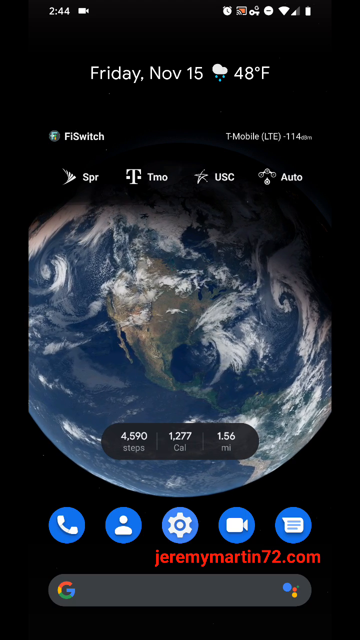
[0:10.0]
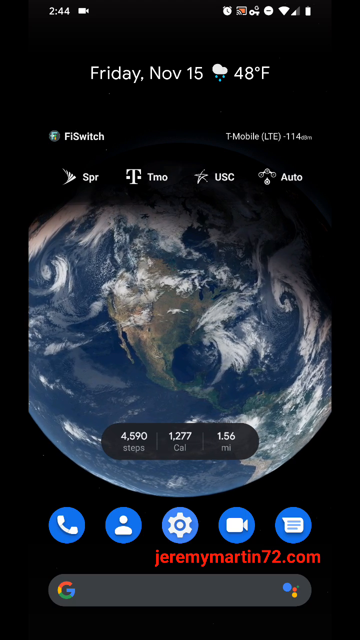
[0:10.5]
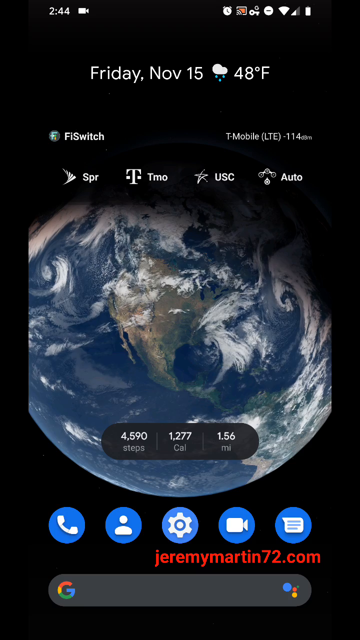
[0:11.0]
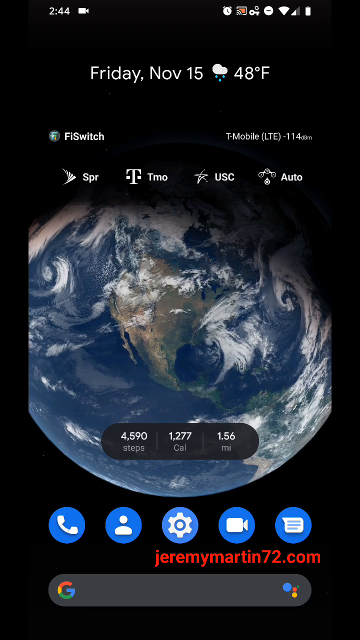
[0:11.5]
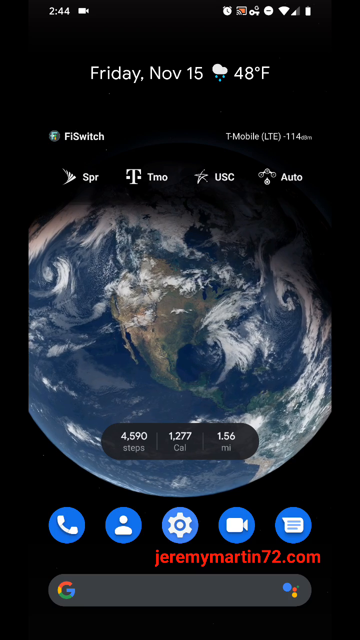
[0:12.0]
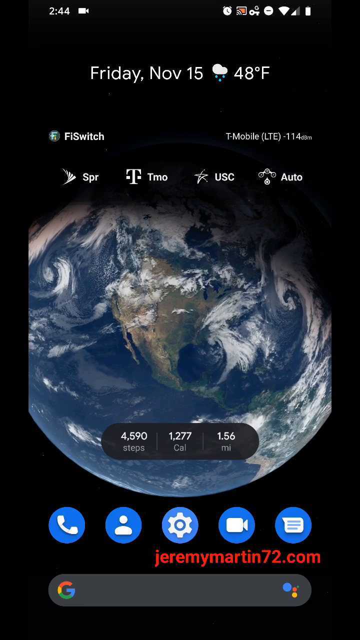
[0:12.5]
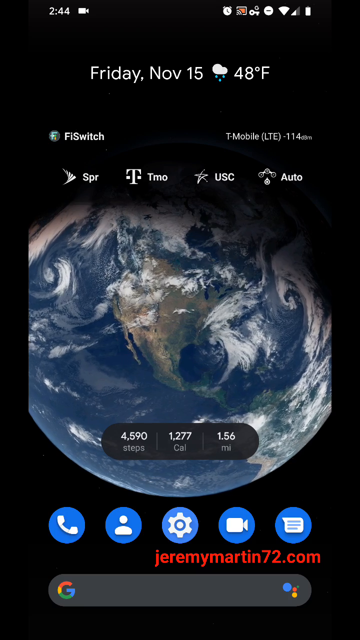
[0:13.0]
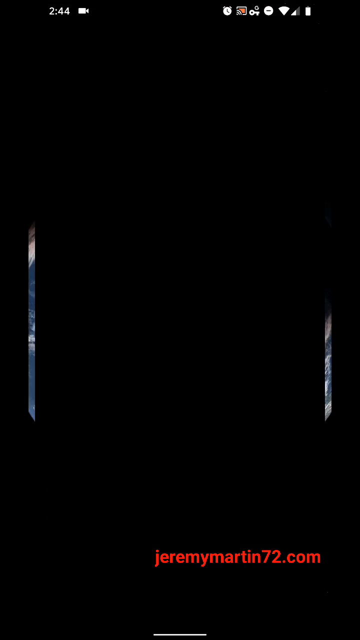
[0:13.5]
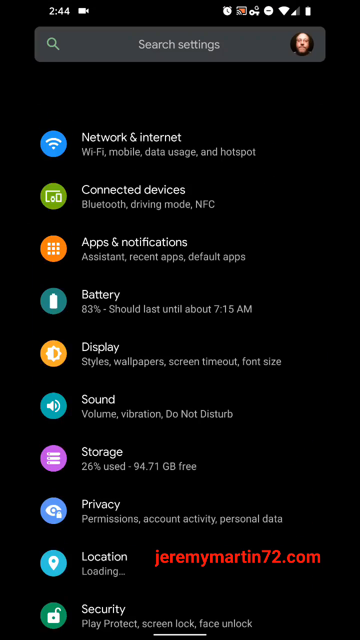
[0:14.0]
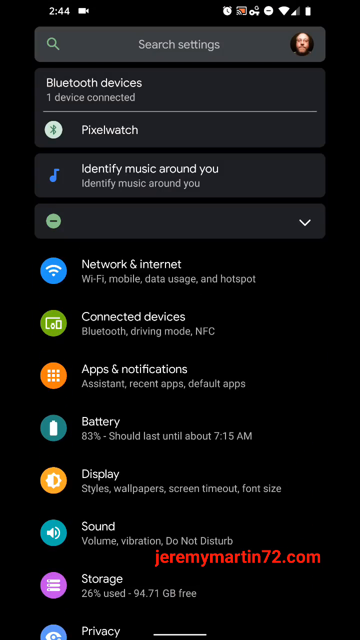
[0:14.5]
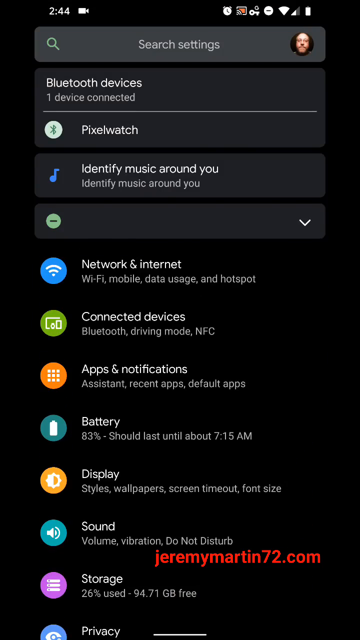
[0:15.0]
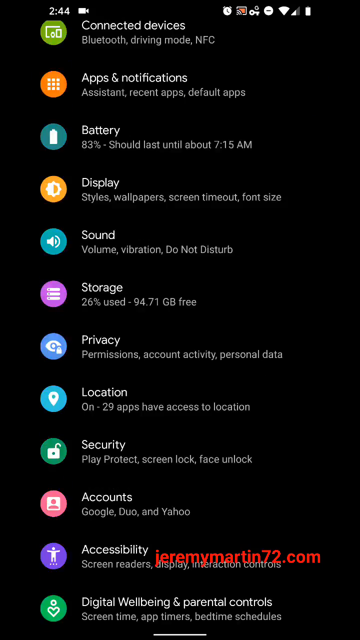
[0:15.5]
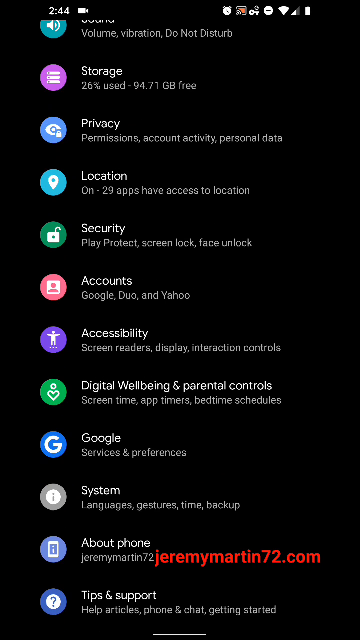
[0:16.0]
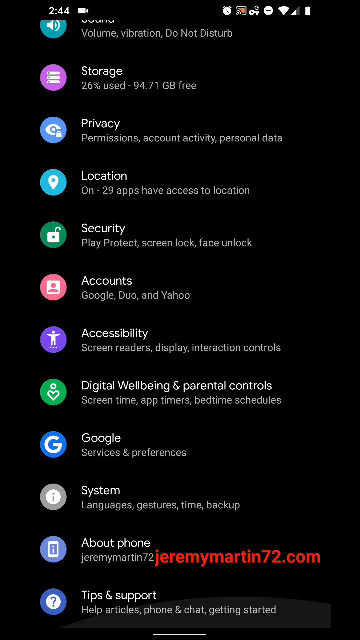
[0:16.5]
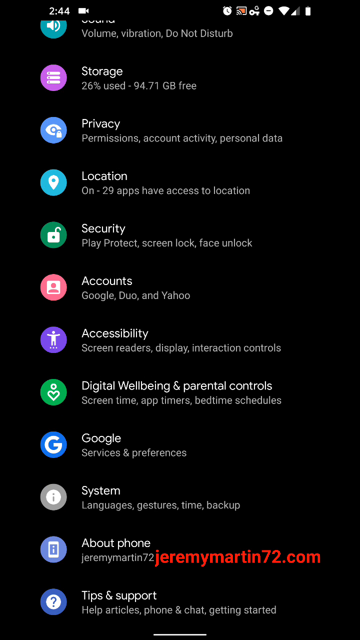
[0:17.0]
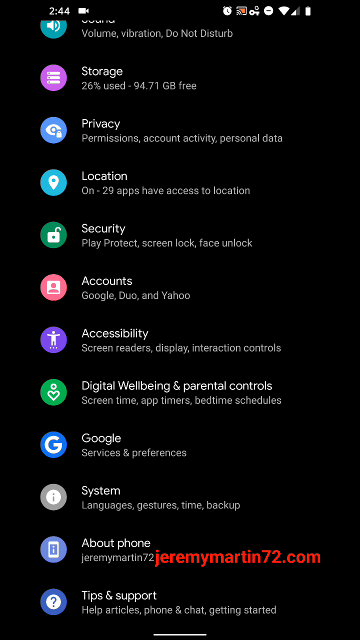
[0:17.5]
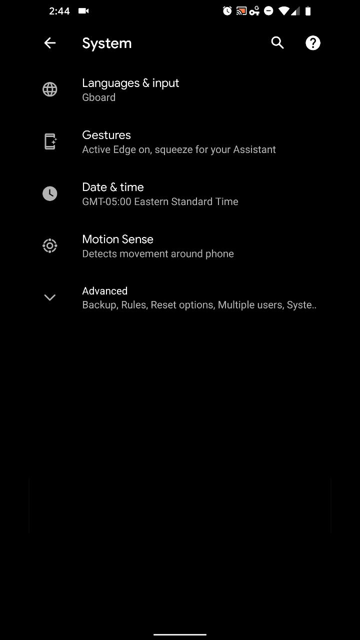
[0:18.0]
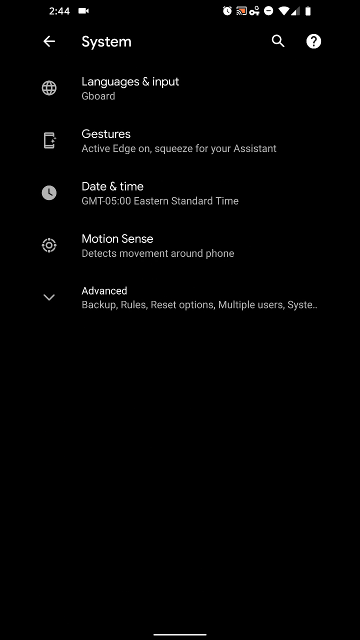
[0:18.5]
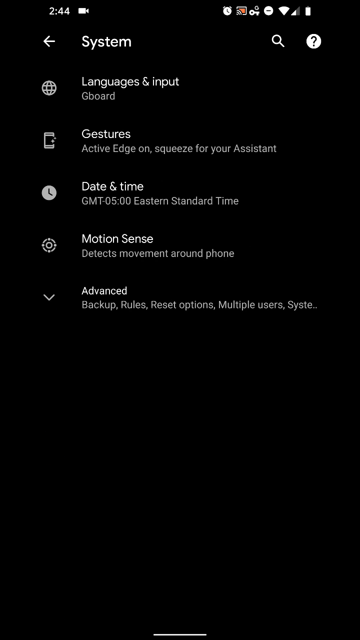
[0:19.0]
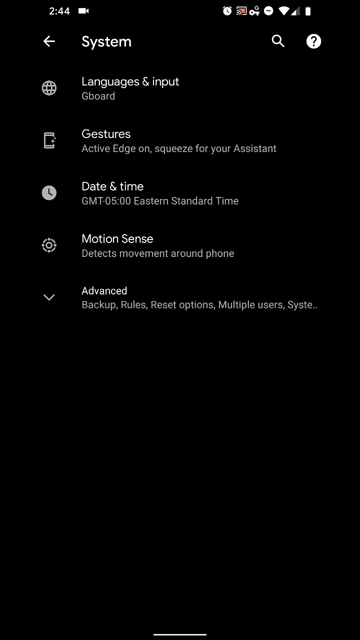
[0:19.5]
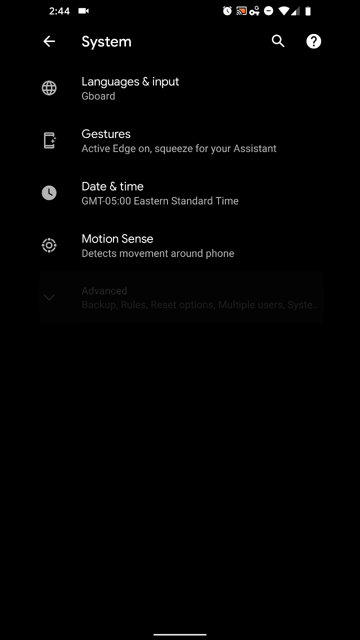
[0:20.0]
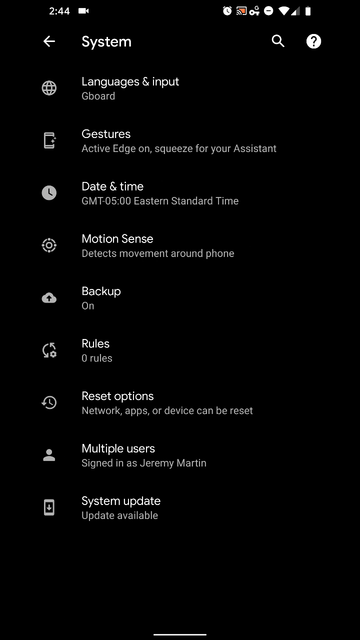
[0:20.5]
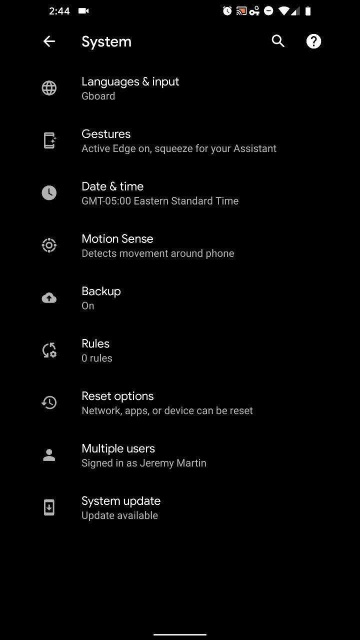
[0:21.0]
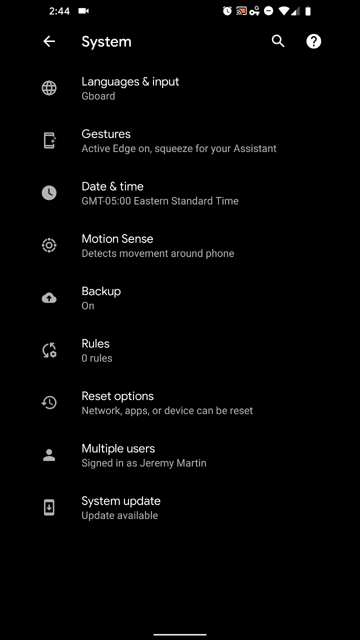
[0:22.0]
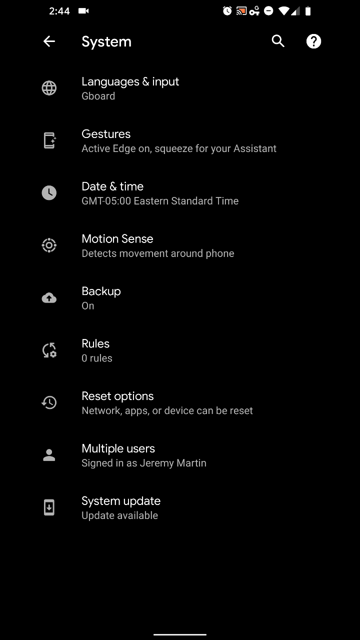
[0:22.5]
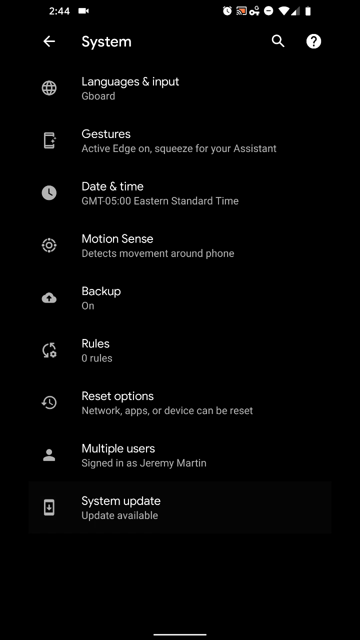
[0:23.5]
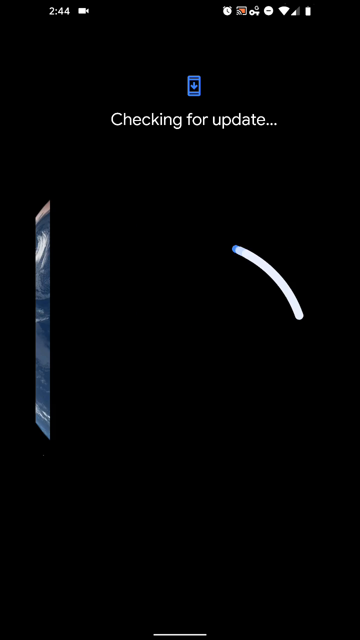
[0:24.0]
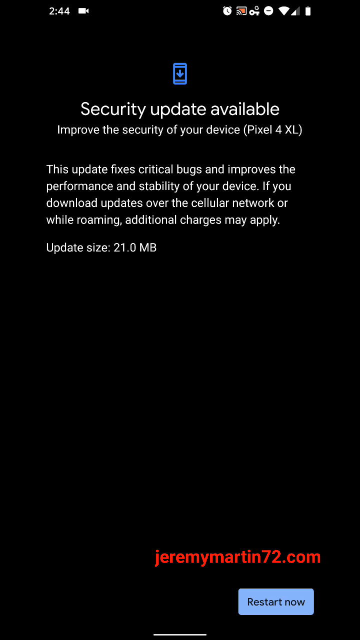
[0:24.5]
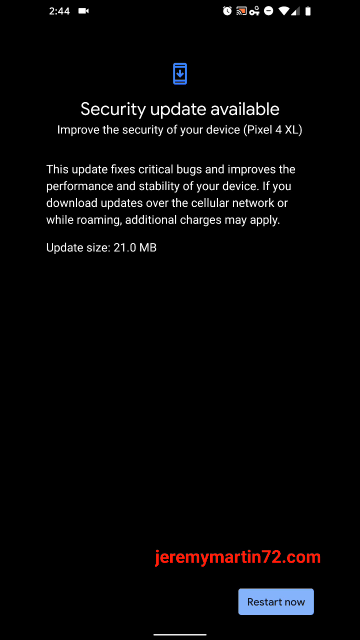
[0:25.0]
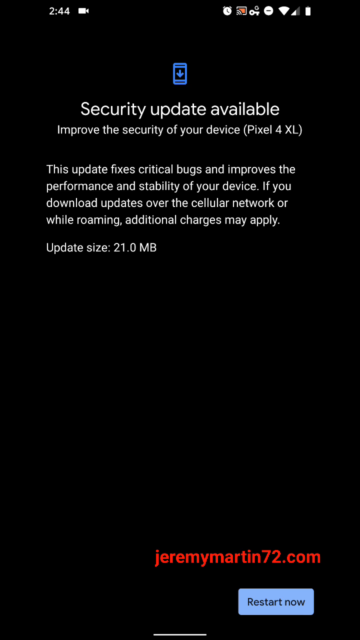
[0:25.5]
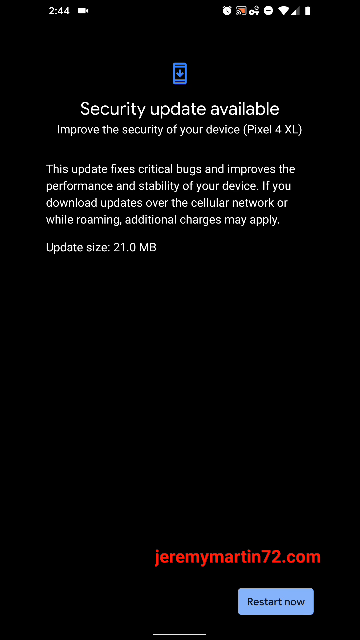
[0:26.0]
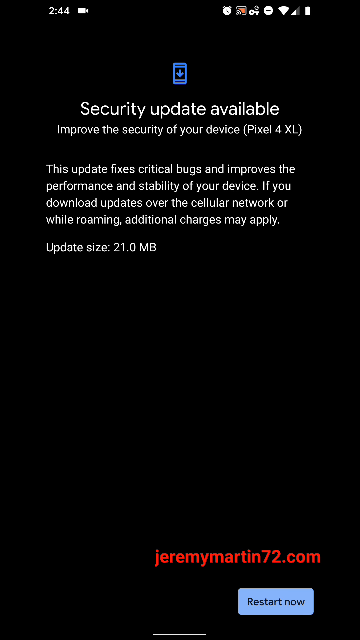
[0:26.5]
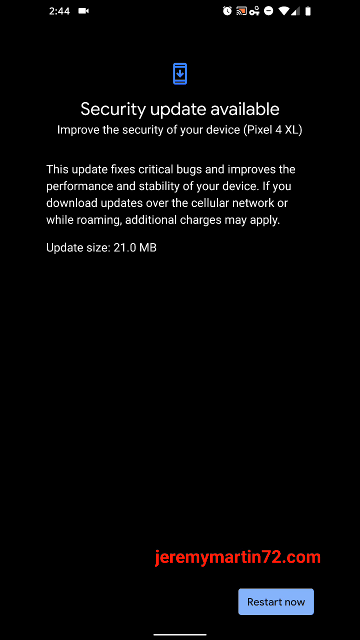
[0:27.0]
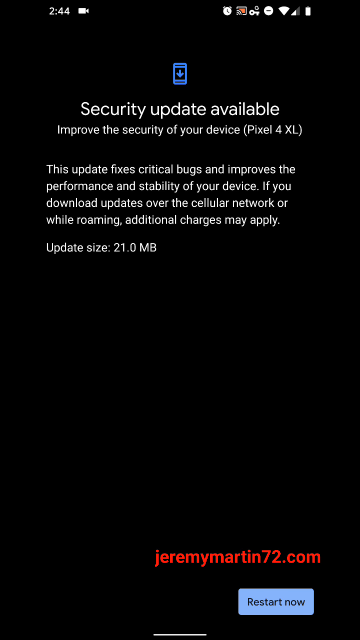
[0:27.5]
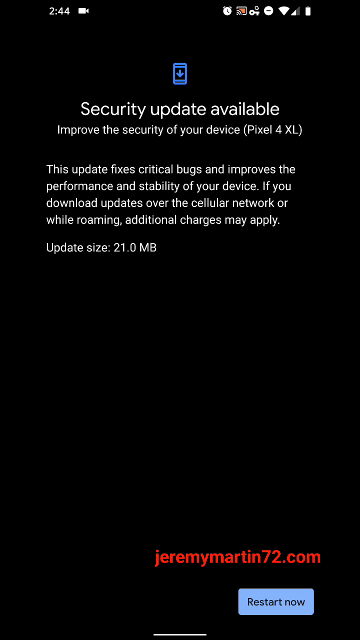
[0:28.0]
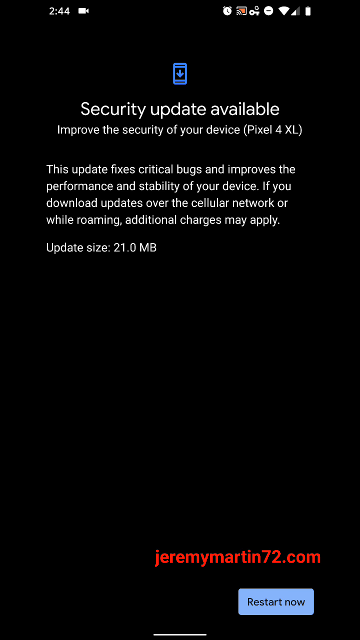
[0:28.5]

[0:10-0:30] The home screen of the mobile device or tablet shows icons at the bottom for the phone, contacts, settings, video and text, all blue circle-shaped icons with white symbols inside. The screen pauses for a few seconds before the settings icon is pressed, and the settings screen comes up with a black background like the home screen. The page is scrolled, and once the scrolling reaches the end, the System option is selected, shown by a faint highlight. The System screen shows different options; the Advanced drop-down is selected and more options appear from the advanced section. System update is chosen, and a security update available screen appears with the update file size and a Restart now button in the bottom right corner.